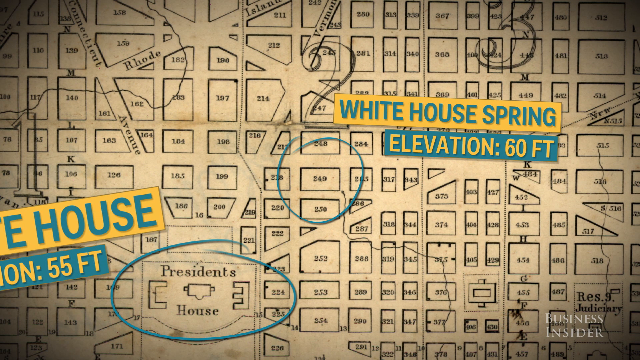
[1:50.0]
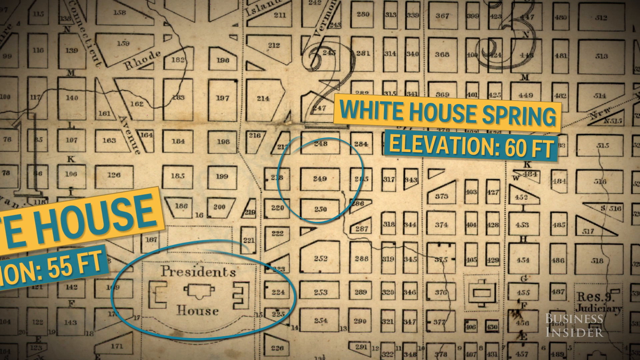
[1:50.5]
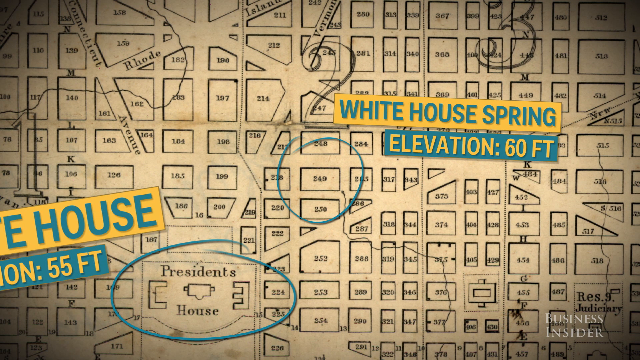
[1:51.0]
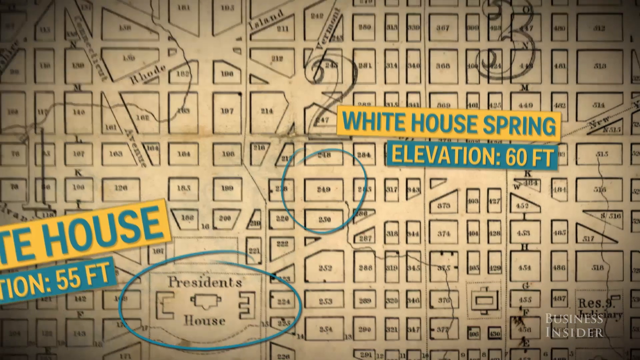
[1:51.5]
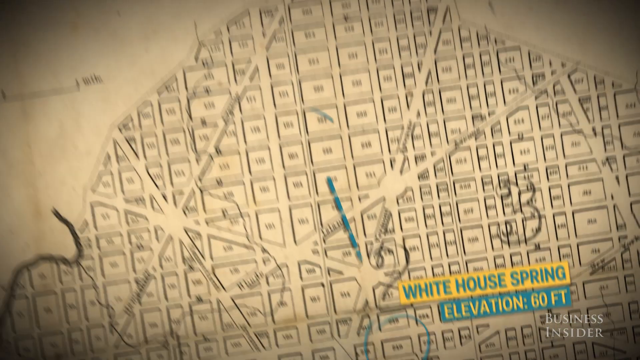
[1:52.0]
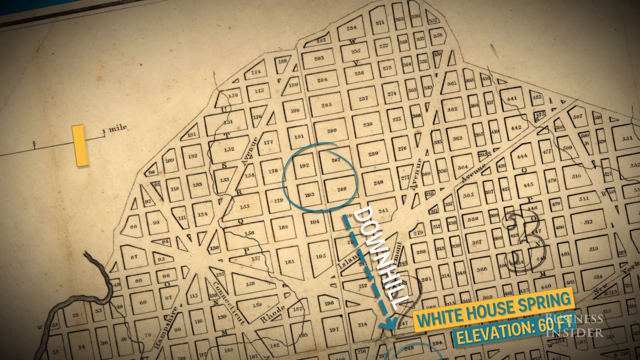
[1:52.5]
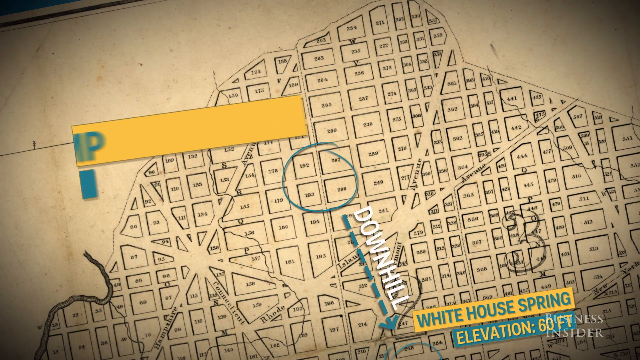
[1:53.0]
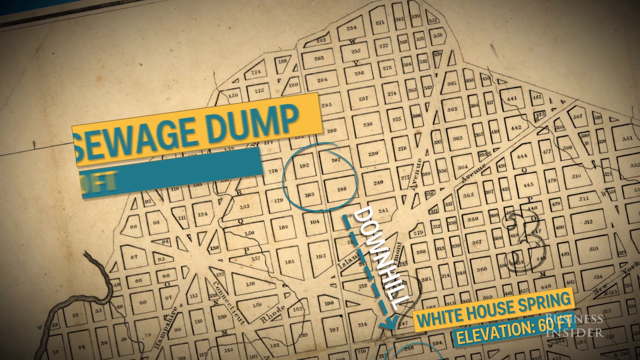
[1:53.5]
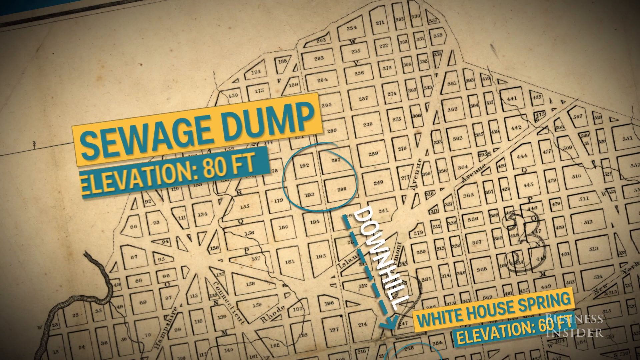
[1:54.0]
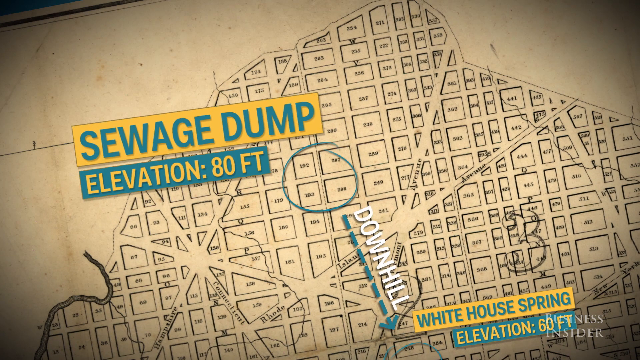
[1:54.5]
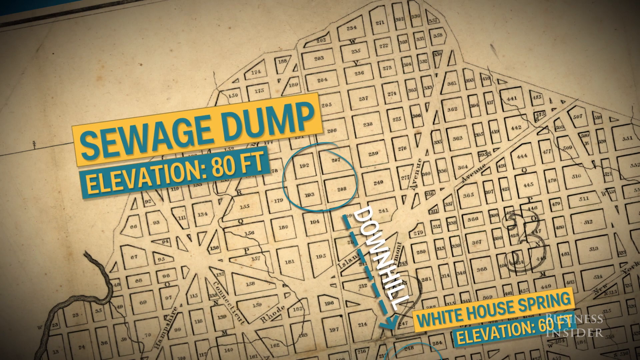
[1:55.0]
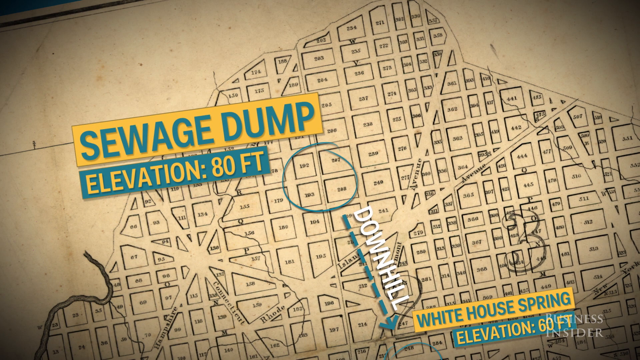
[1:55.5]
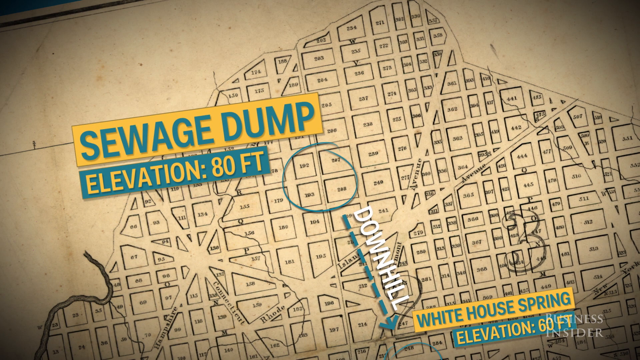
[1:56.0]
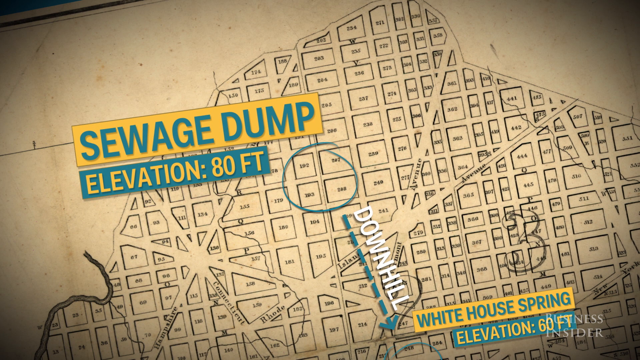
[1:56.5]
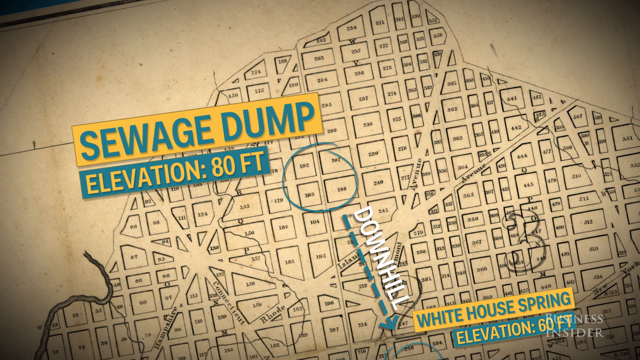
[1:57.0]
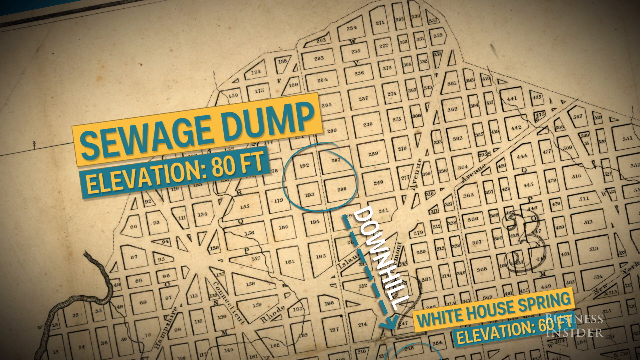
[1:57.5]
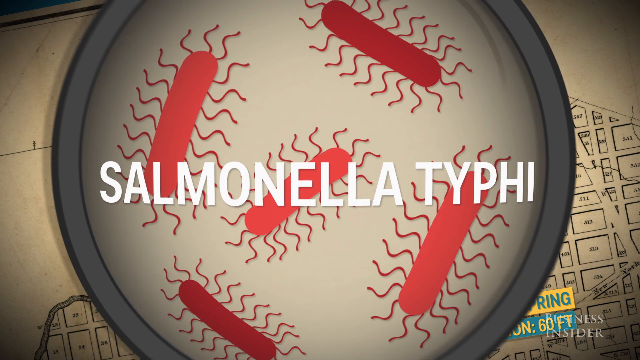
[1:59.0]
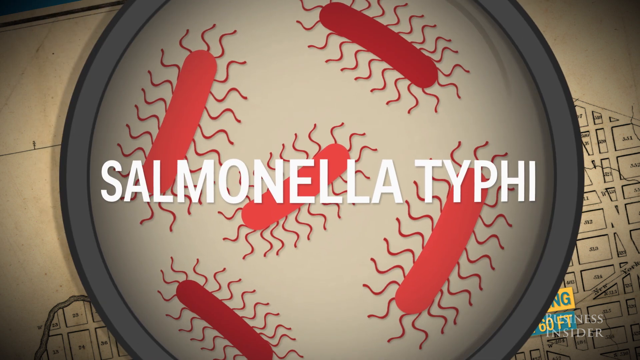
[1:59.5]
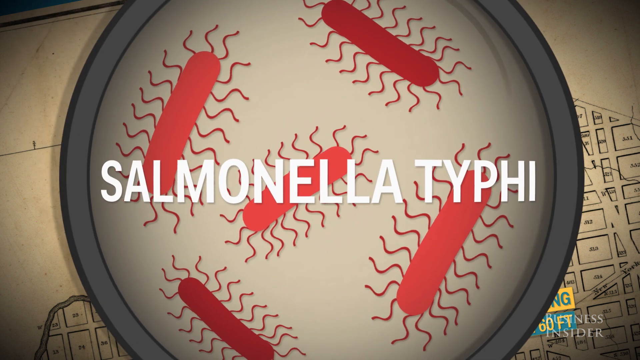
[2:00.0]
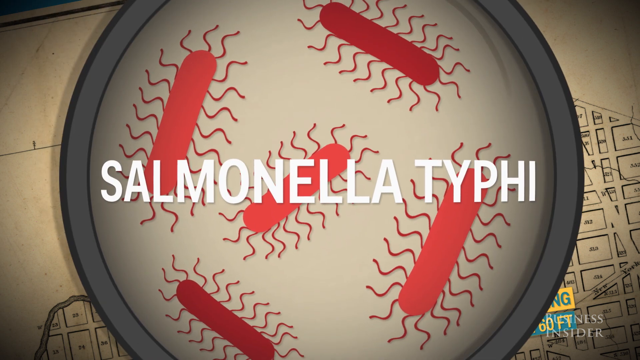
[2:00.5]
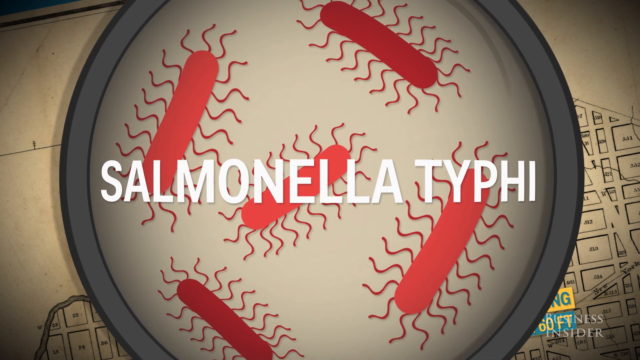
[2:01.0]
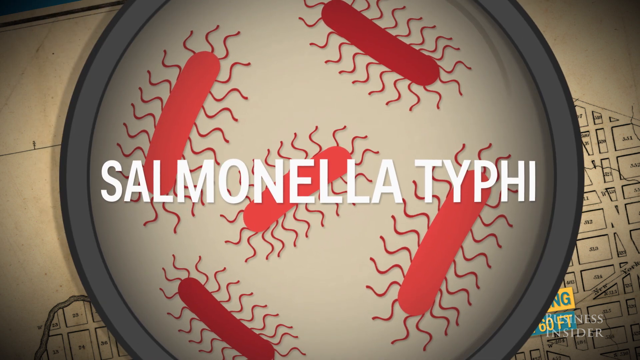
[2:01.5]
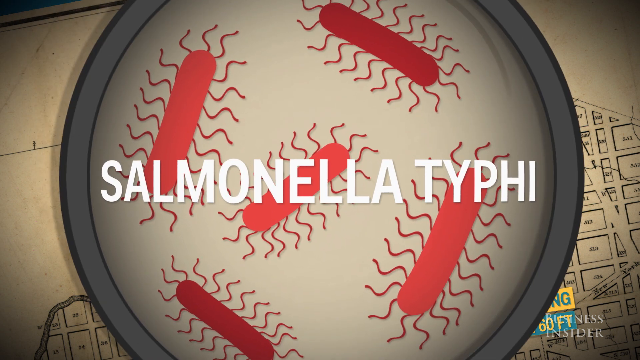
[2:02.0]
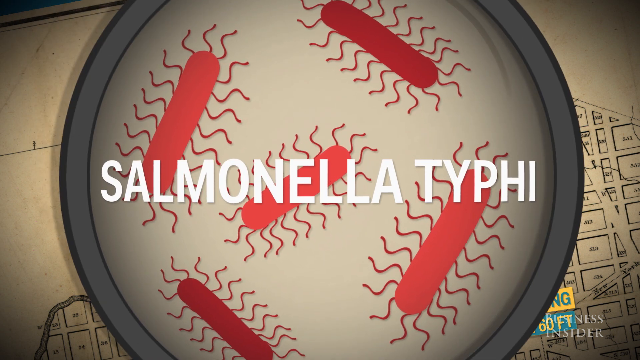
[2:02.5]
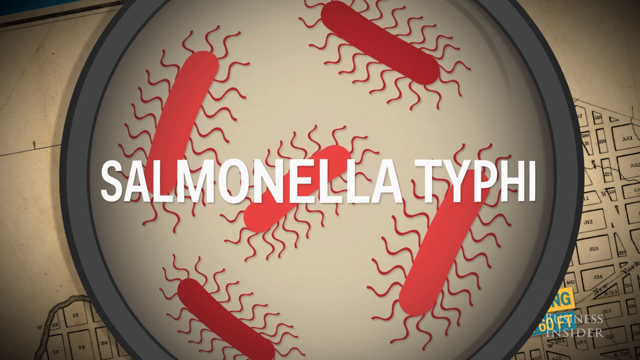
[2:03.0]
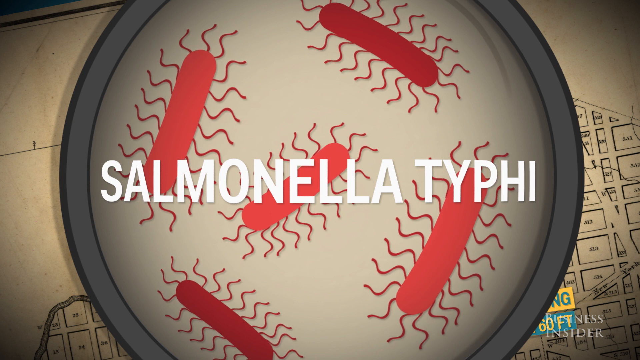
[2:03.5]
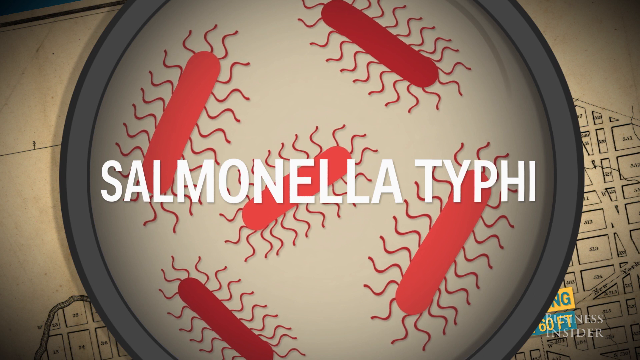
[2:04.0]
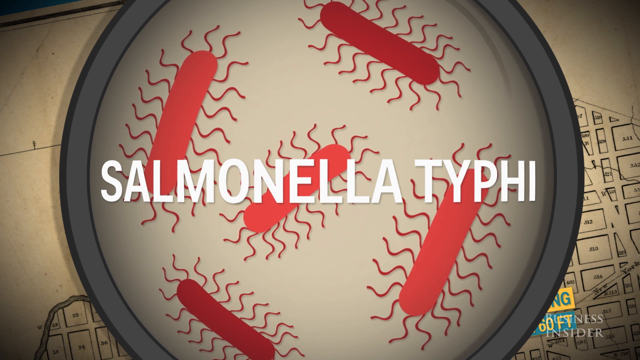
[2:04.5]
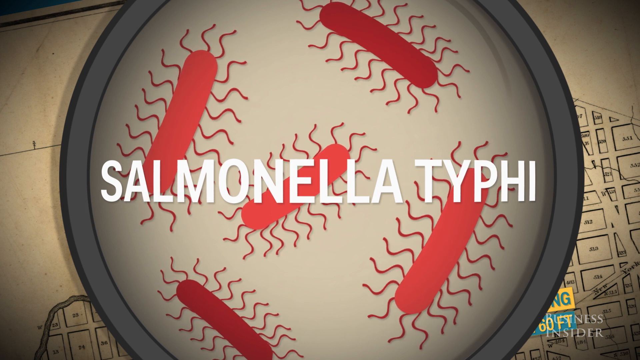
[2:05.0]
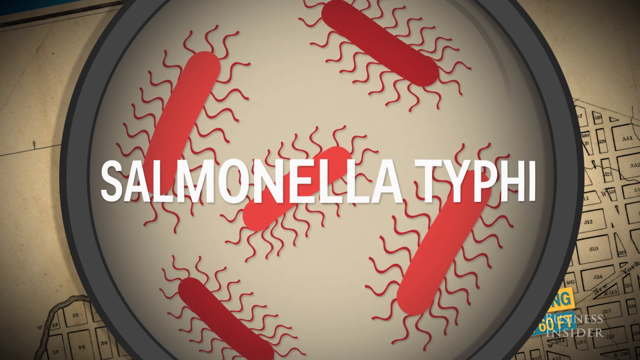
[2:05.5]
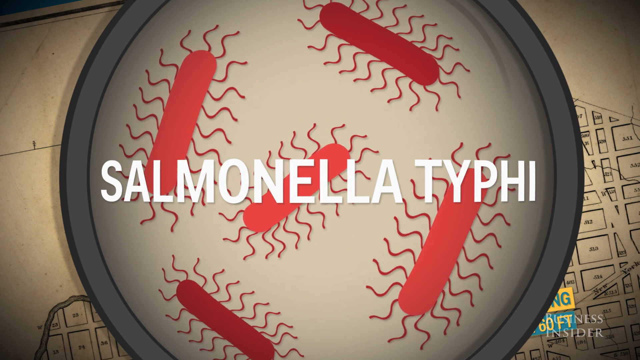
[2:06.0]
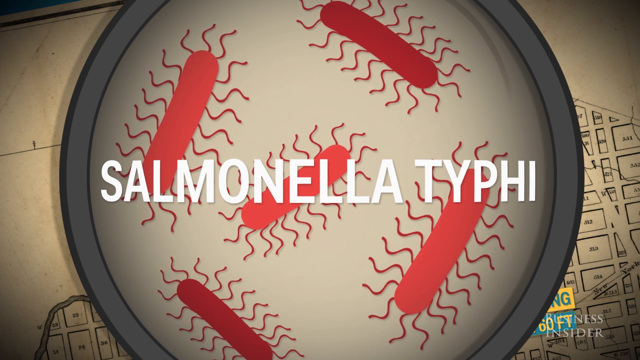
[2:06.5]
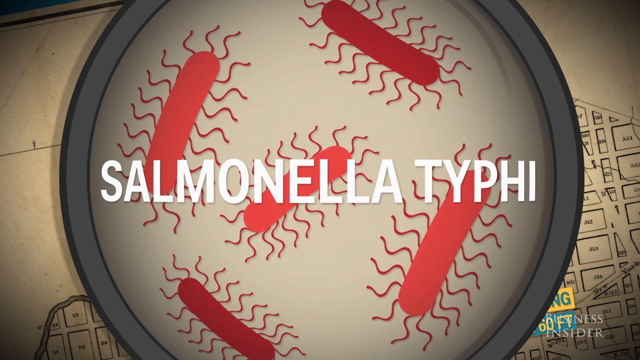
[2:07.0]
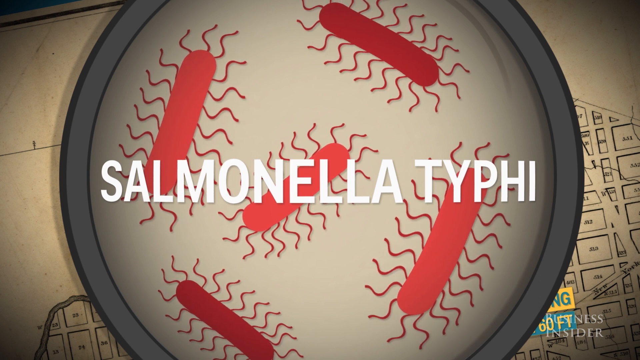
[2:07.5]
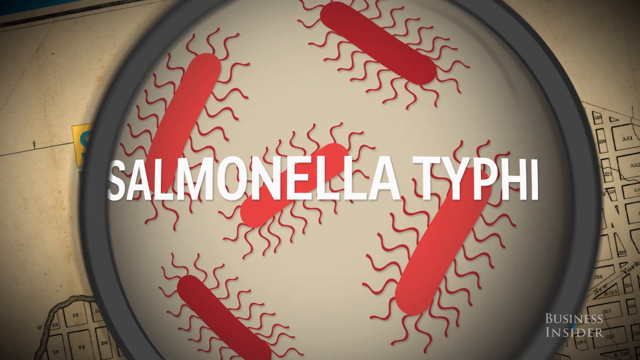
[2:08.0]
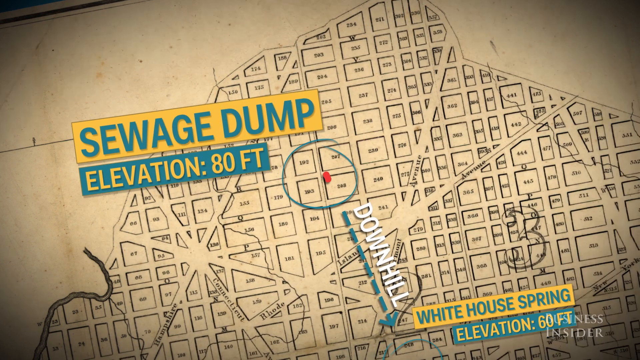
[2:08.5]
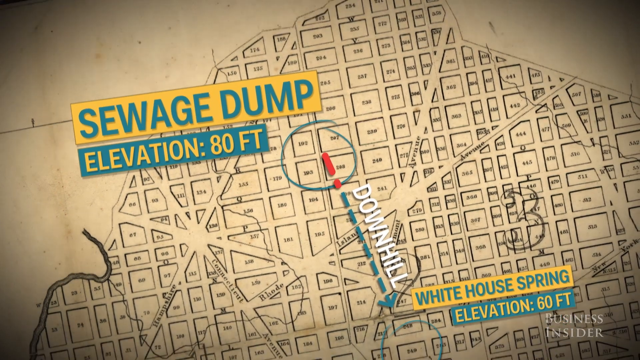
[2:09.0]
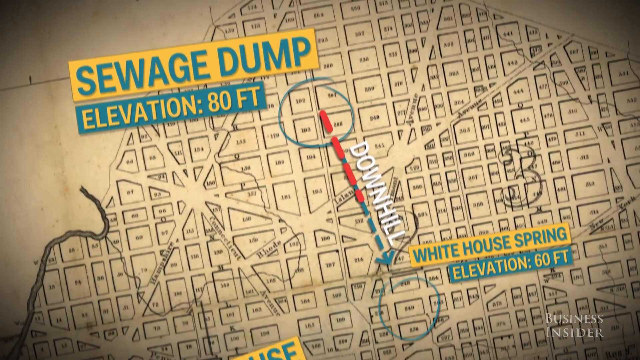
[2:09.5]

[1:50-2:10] A map of different areas of Washington, D.C. appears, and four areas are circled, with a label reading "sewage dump, elevation 80 feet." Underneath, it says "downhill" and shows the circle going downhill towards the White House. The next slide looks like a depiction of the bugs that would cause the virus Salmonella, set within a gray and black circle. There are five bugs, red with multiple squiggly feet, and over them the text reads "Salmonella typhi." The bugs wiggle around for a bit. The following slide returns to the sewage dump and shows how it makes its way down towards the White House.